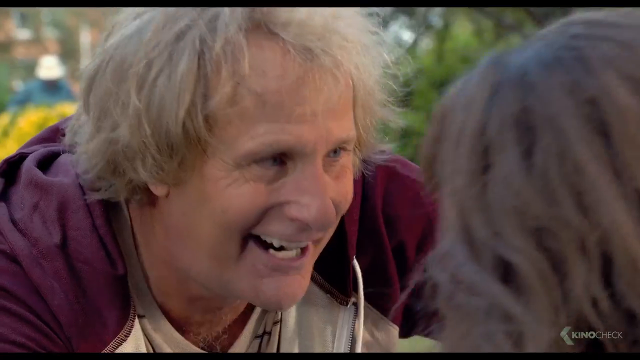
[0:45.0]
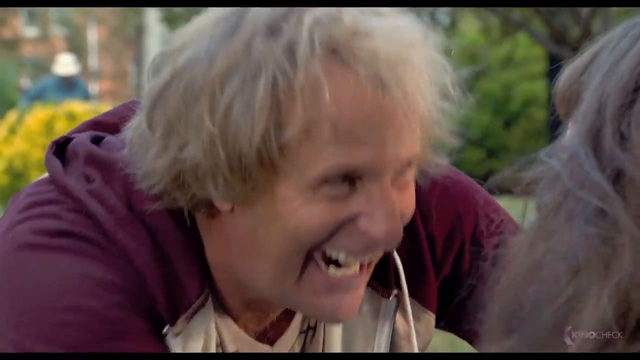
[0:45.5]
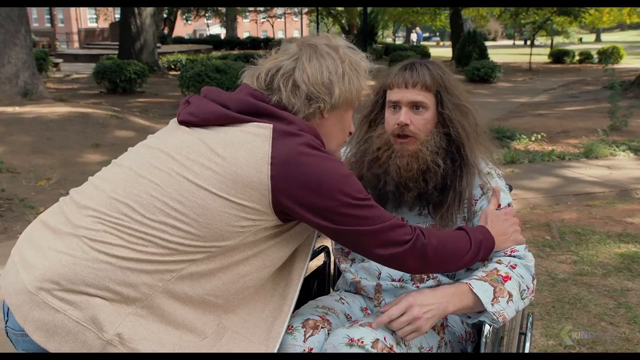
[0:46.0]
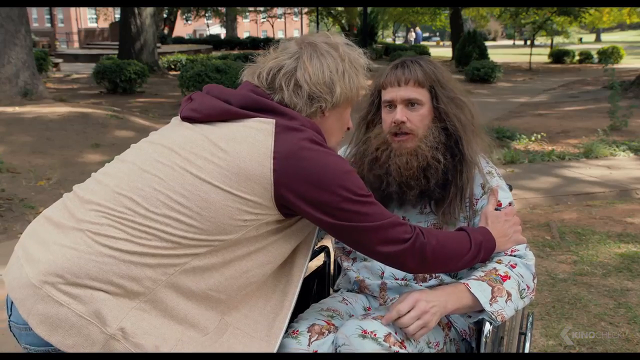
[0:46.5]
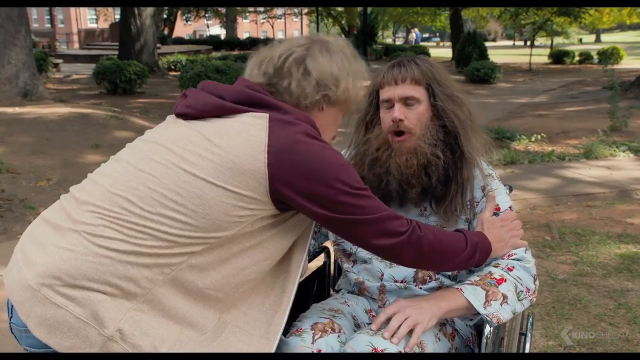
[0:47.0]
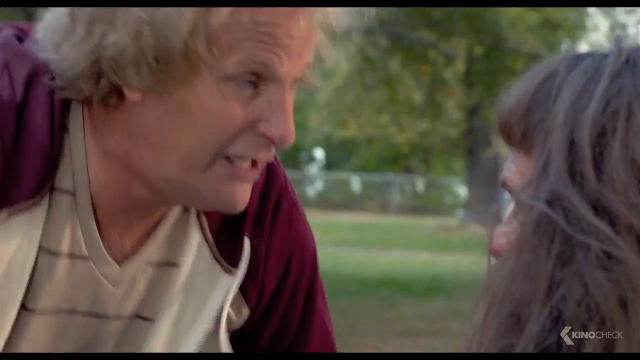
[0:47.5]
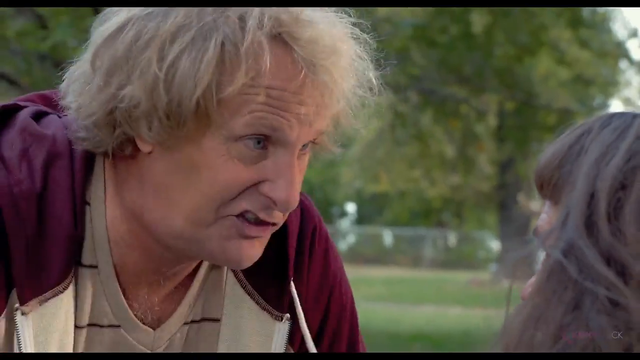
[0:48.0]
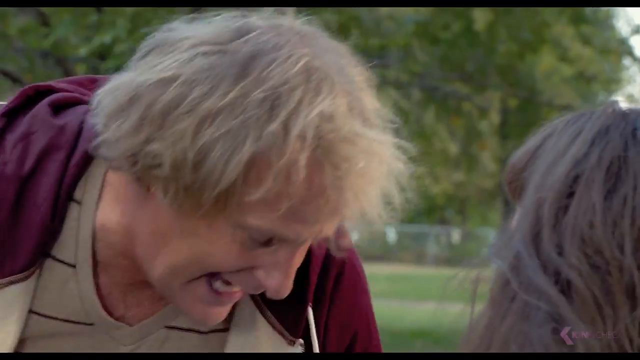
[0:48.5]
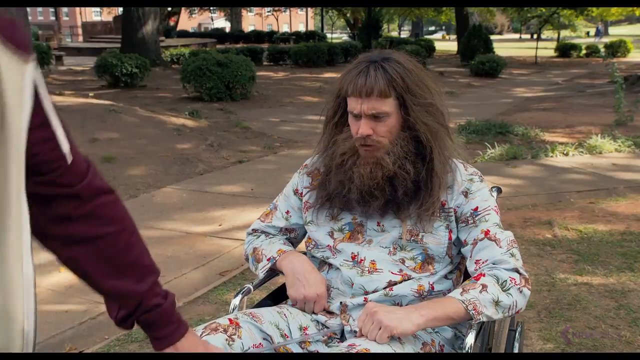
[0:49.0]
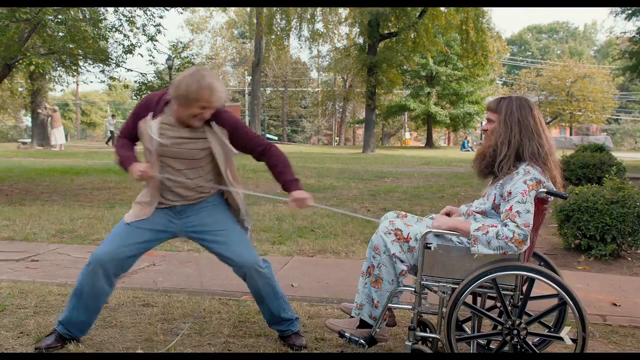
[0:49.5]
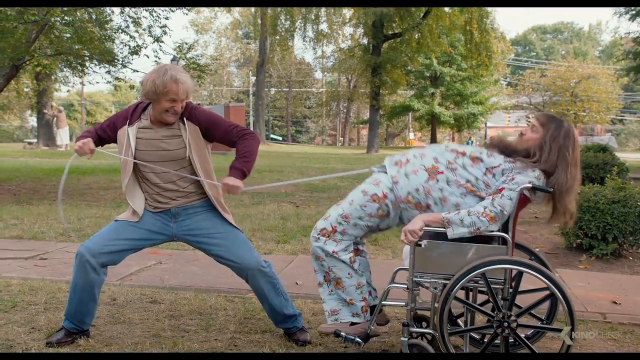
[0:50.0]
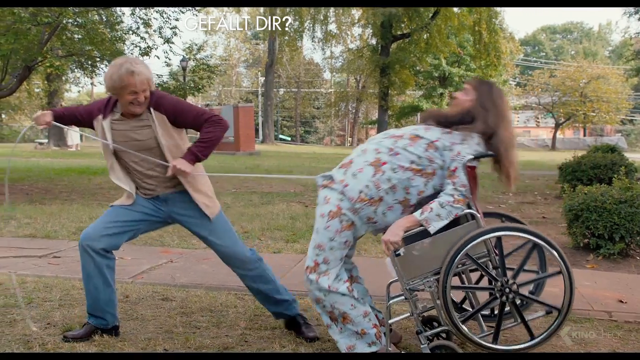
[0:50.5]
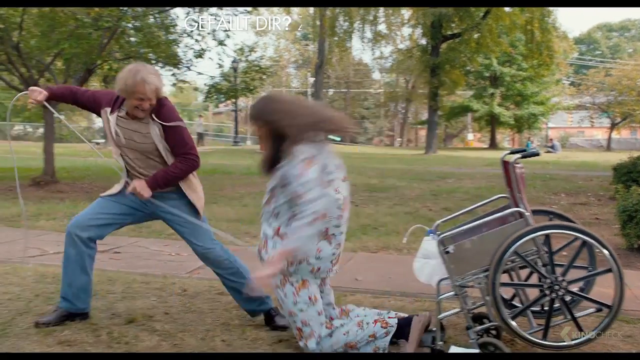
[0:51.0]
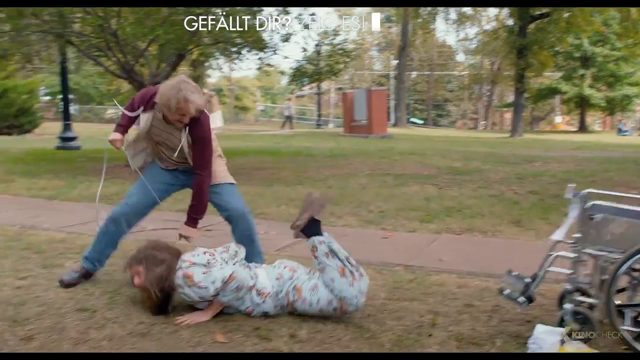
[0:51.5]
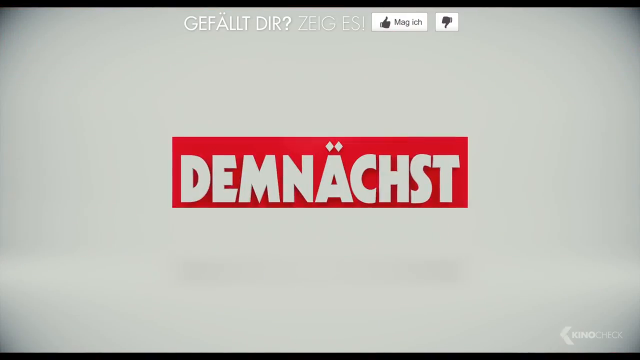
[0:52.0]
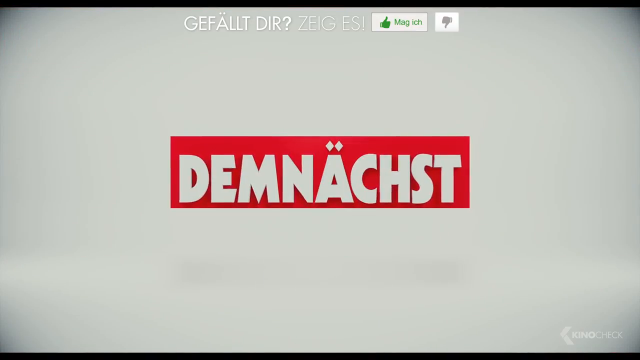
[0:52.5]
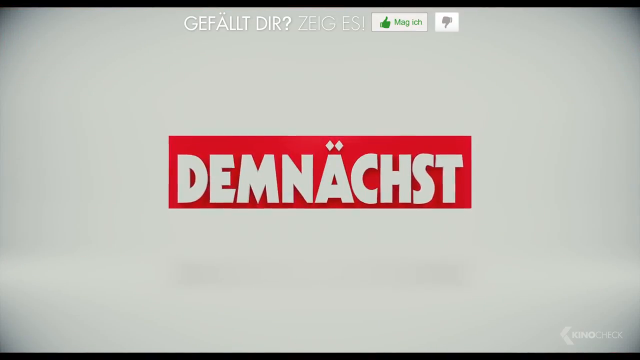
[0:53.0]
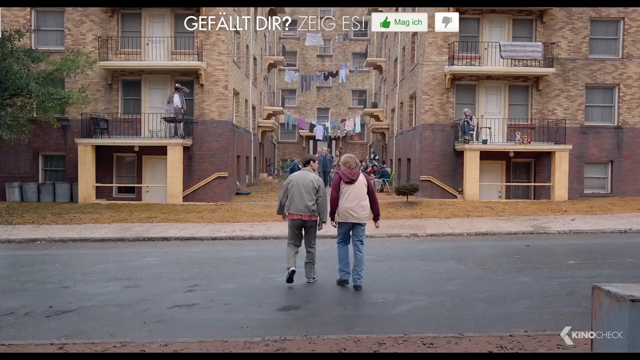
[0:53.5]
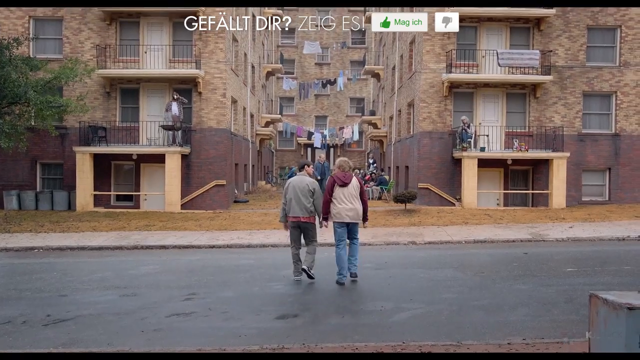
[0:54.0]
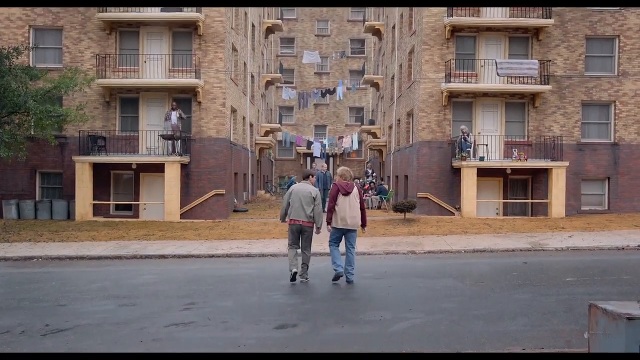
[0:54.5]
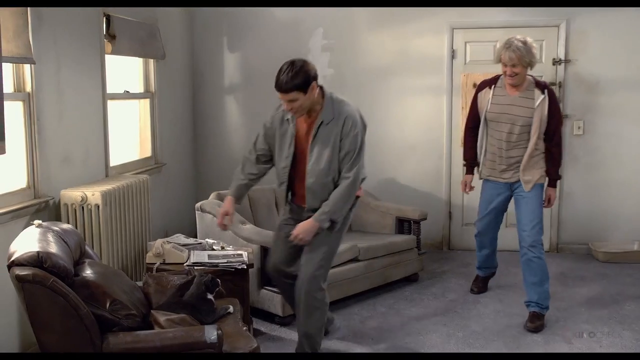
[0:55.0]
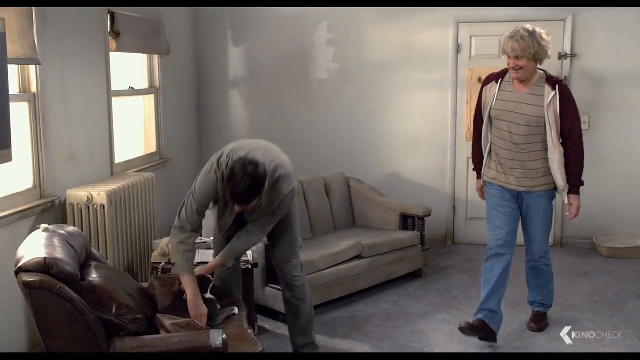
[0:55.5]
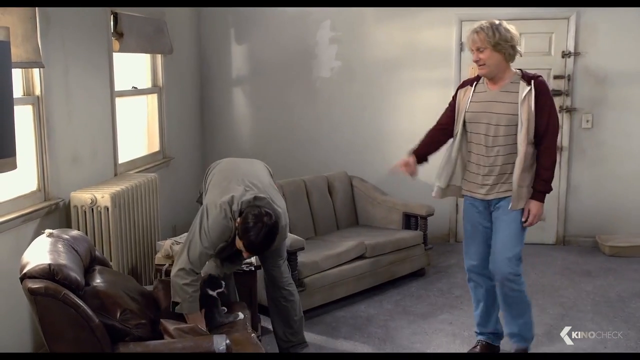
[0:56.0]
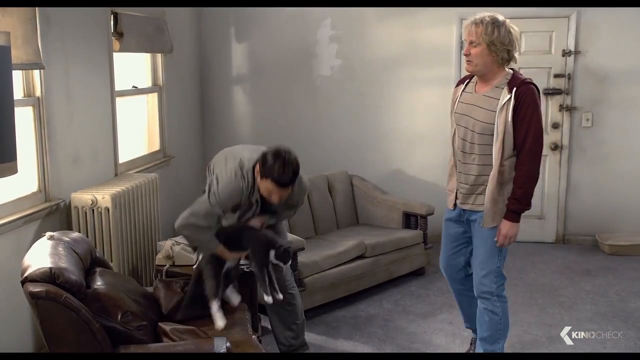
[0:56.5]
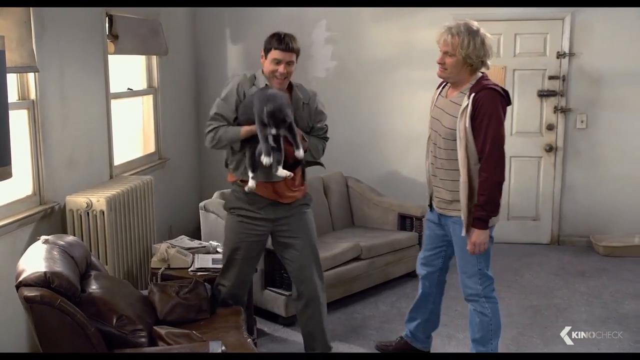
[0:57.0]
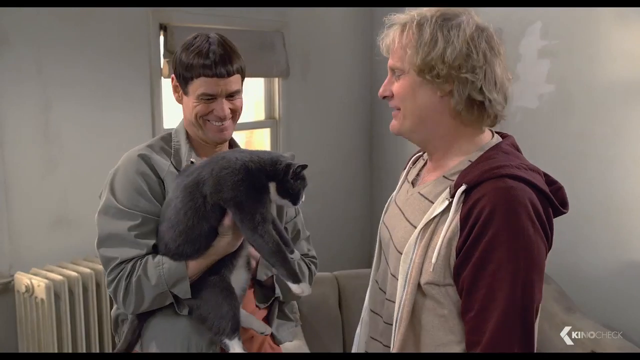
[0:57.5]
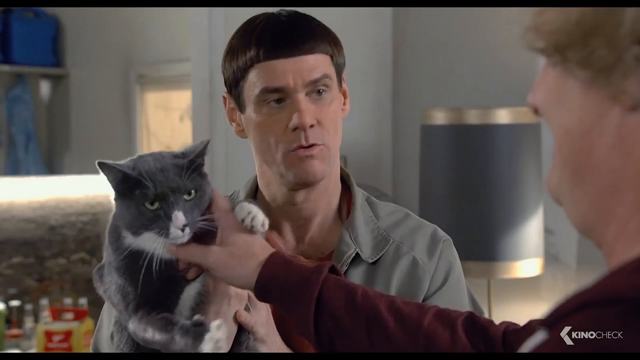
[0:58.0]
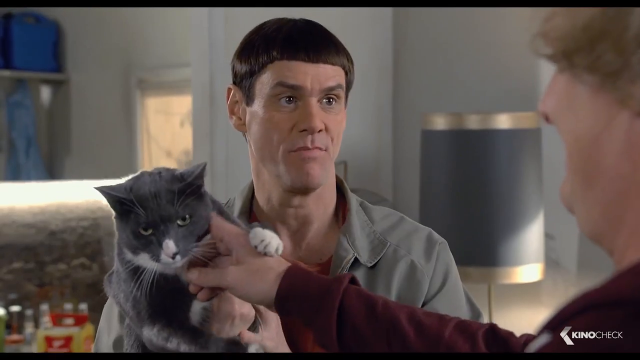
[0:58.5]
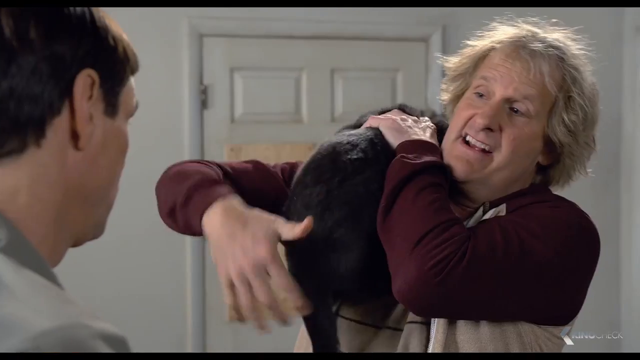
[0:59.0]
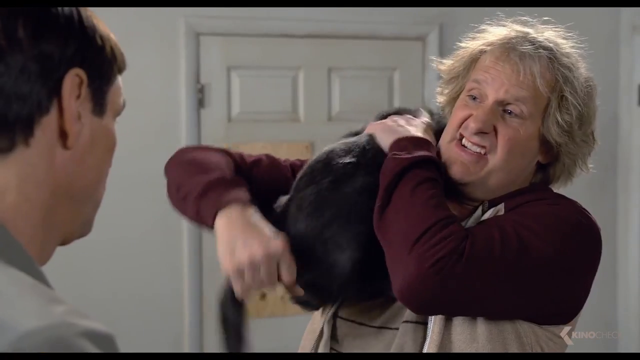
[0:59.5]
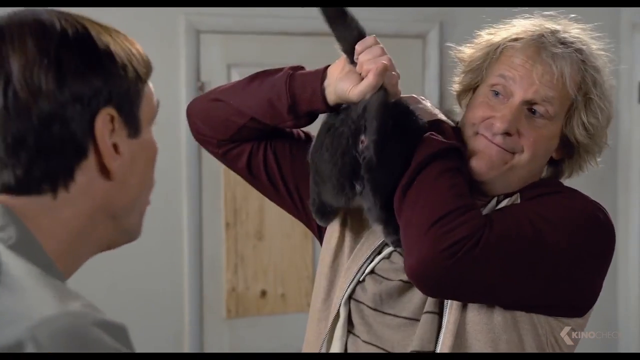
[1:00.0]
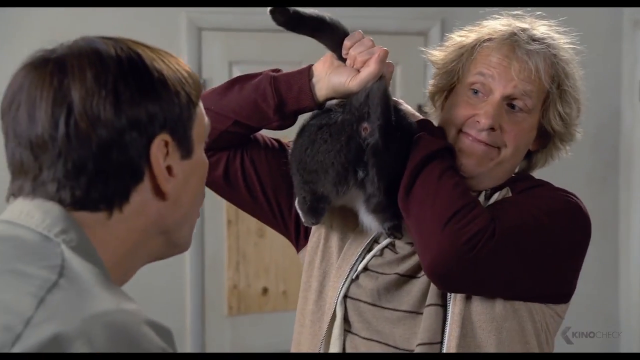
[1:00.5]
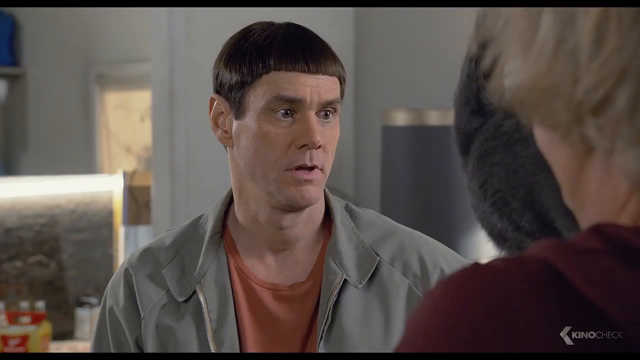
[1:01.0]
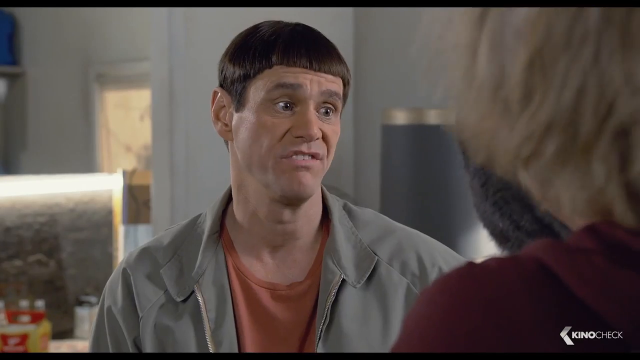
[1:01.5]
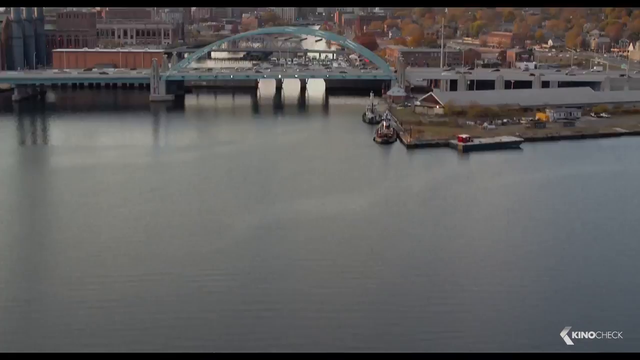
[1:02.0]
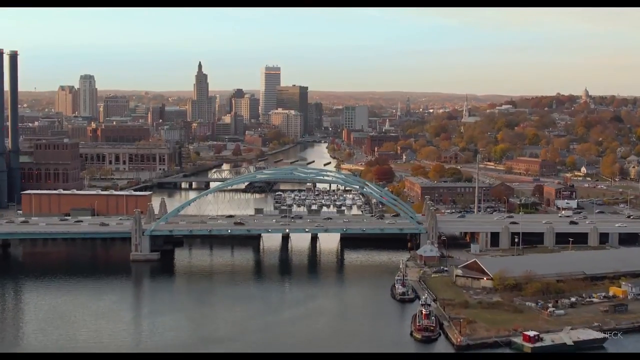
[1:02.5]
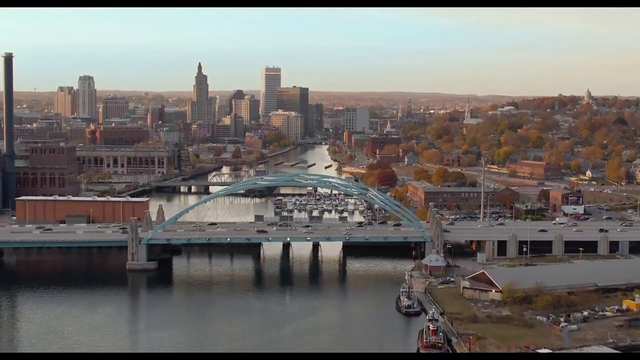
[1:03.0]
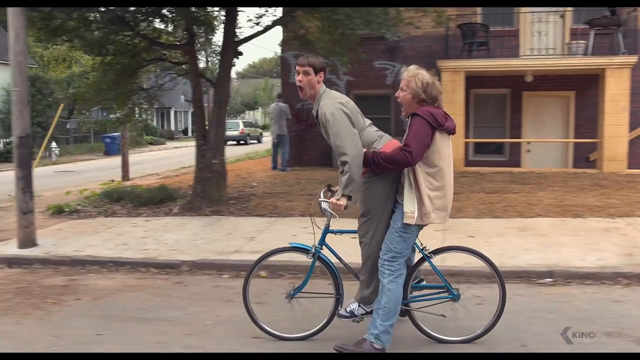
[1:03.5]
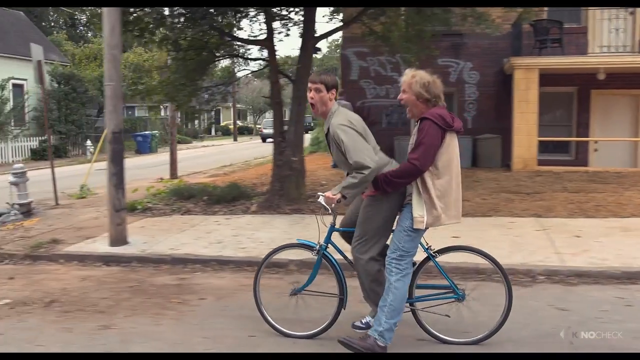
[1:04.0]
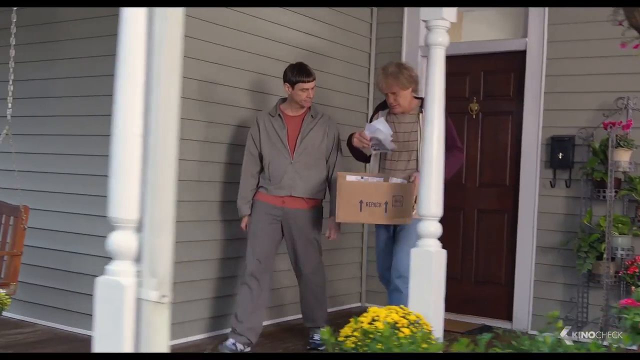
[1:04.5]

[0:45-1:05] The older man grabs the wheelchair man on both sides, then lets go, grabs the drawstring of the man's pants and pulls it straight out, pulling him off the chair. A screen then says "demnächst", apparently a German word. In the next scene the man is no longer in the wheelchair; the two walk side by side in normal clothes toward a giant apartment complex, where people are running drawstrings and drawing their clothes across the area. Inside an apartment, the former wheelchair man now has a bowl cut, having shaved off his beard and hair, and he picks up a cat off a chair. The scene then cuts to the two riding a tandem and making homoerotic gestures to each other.